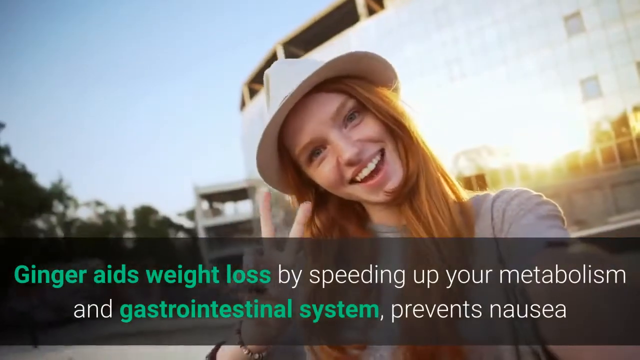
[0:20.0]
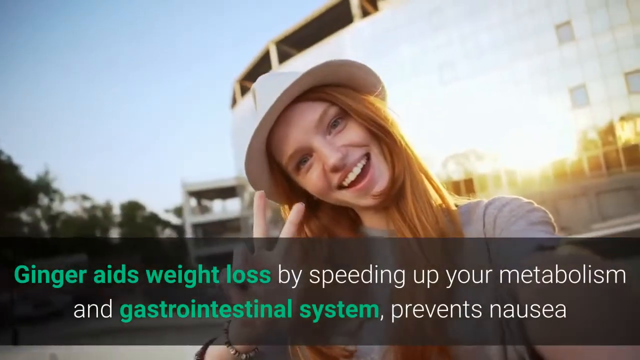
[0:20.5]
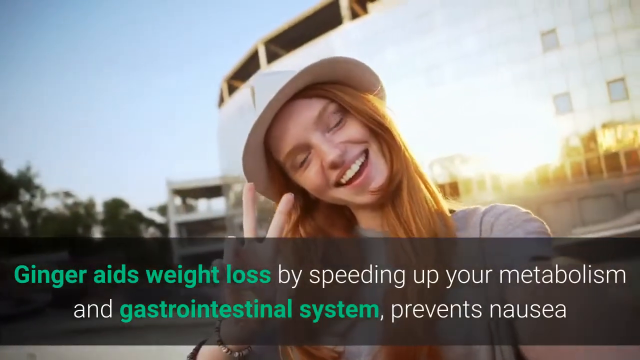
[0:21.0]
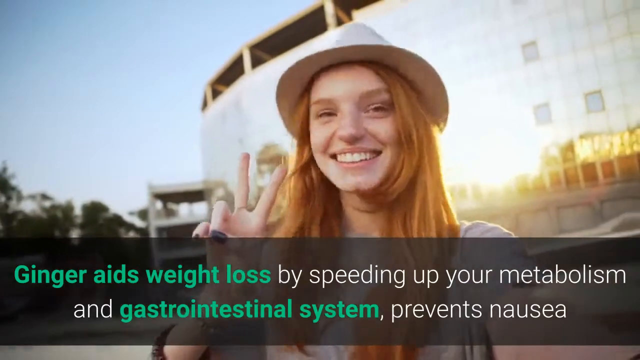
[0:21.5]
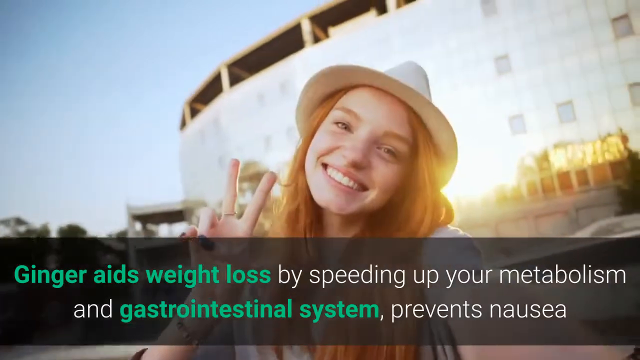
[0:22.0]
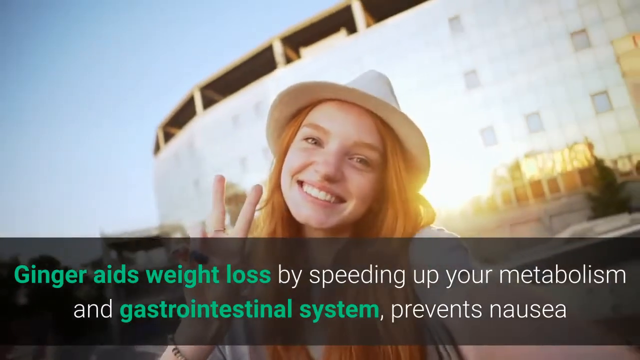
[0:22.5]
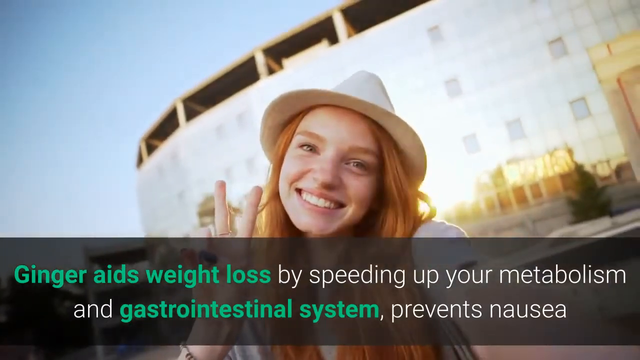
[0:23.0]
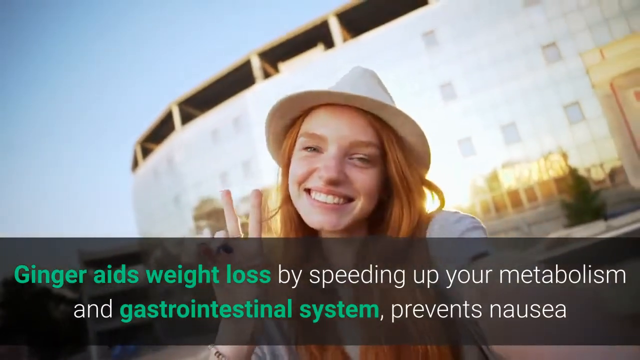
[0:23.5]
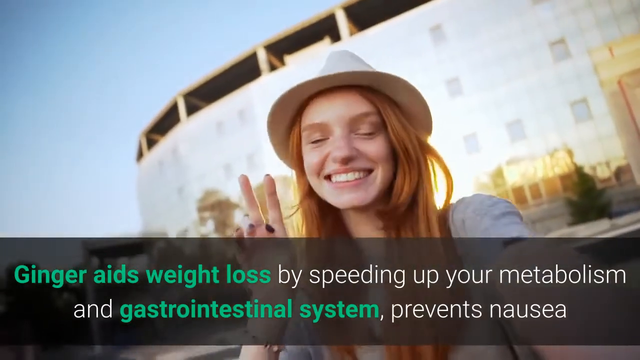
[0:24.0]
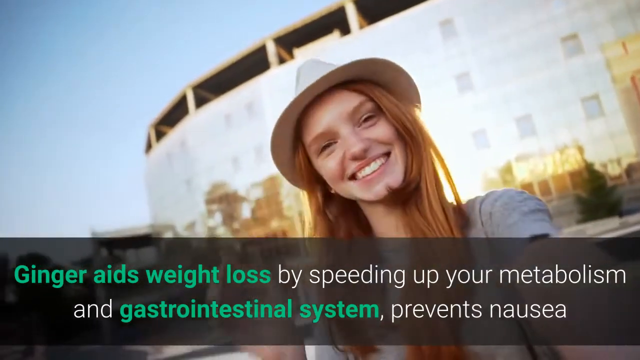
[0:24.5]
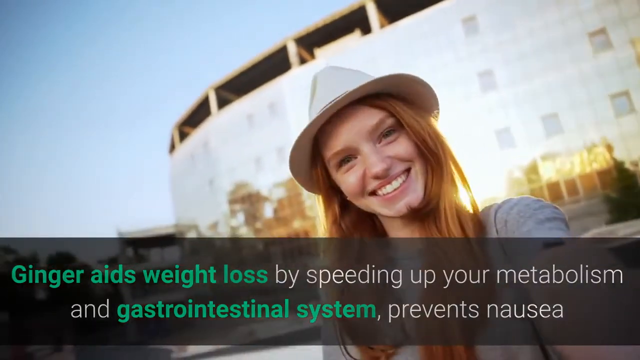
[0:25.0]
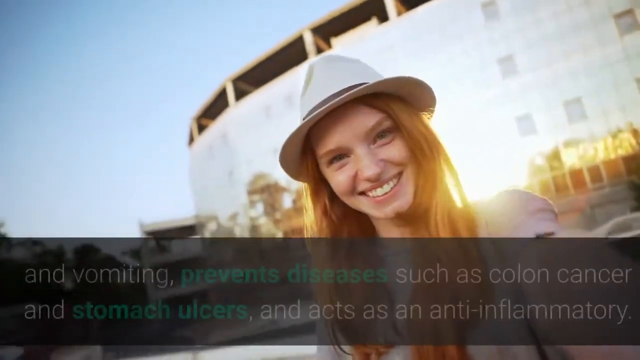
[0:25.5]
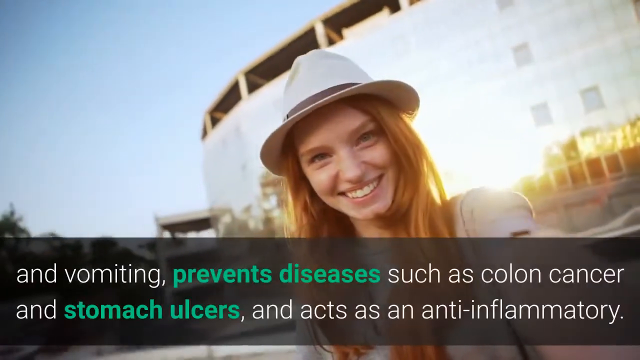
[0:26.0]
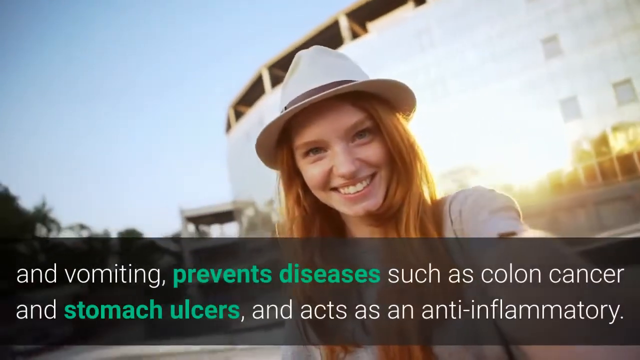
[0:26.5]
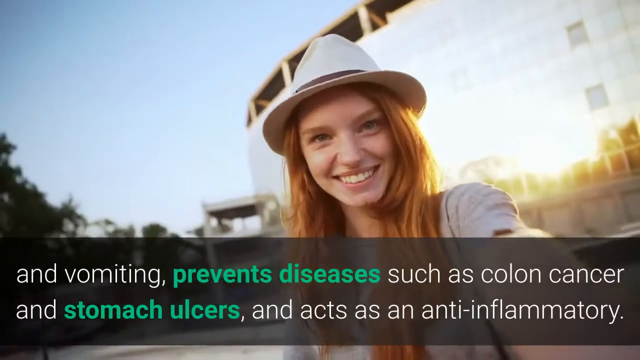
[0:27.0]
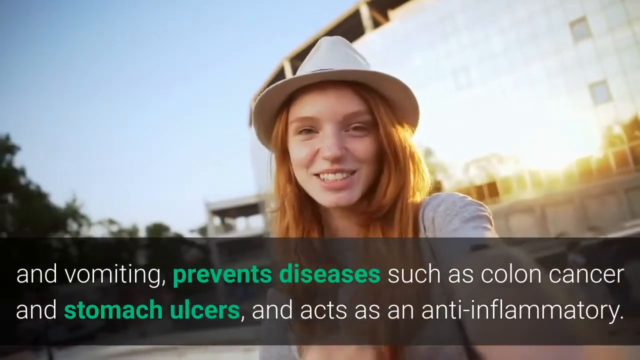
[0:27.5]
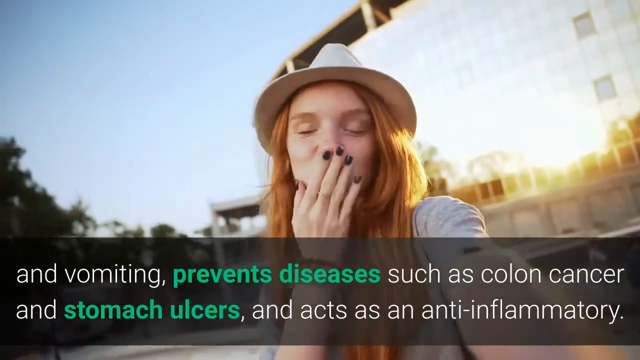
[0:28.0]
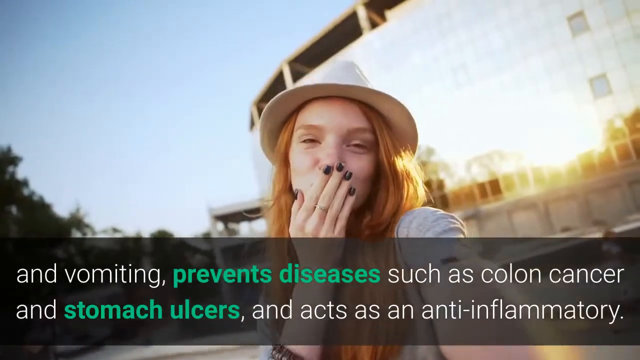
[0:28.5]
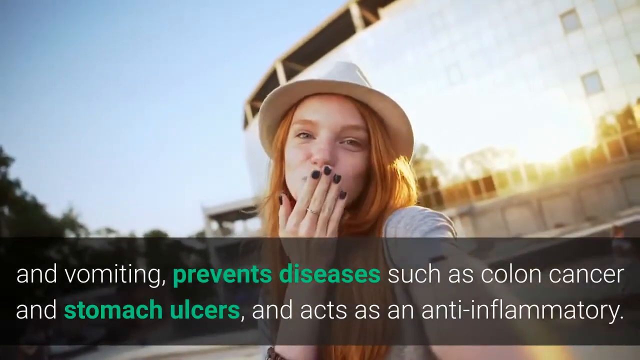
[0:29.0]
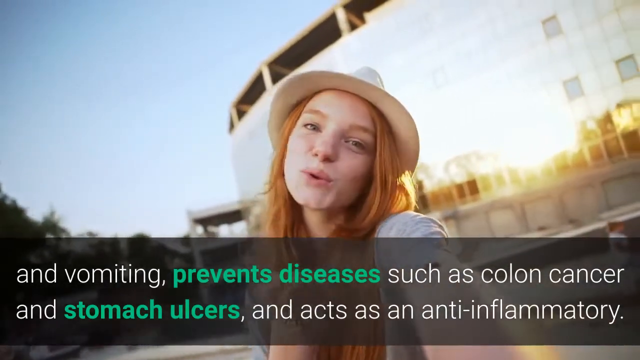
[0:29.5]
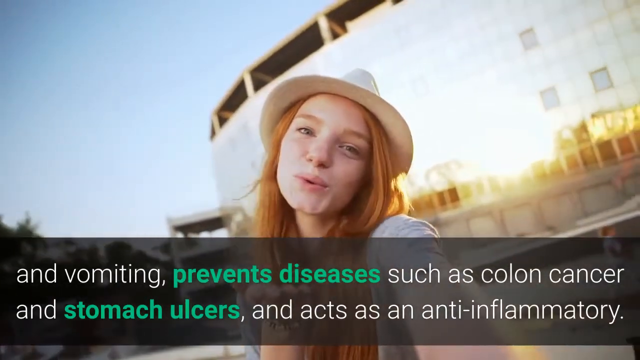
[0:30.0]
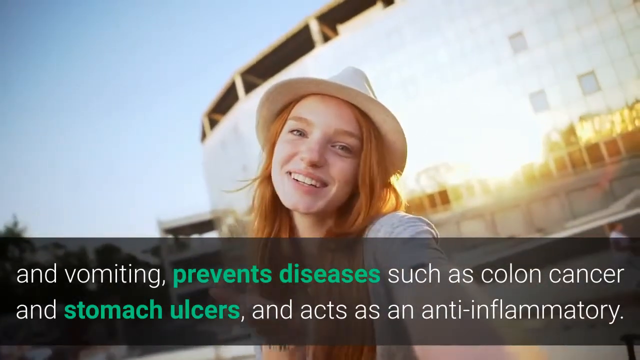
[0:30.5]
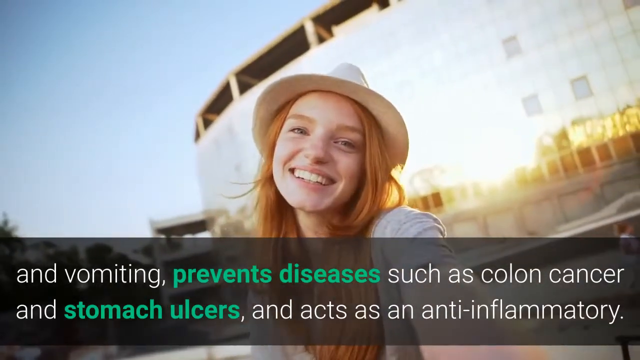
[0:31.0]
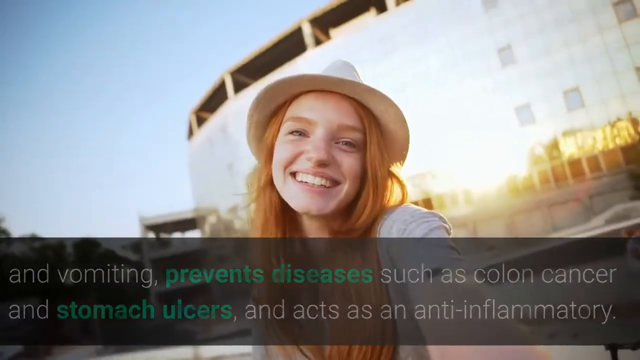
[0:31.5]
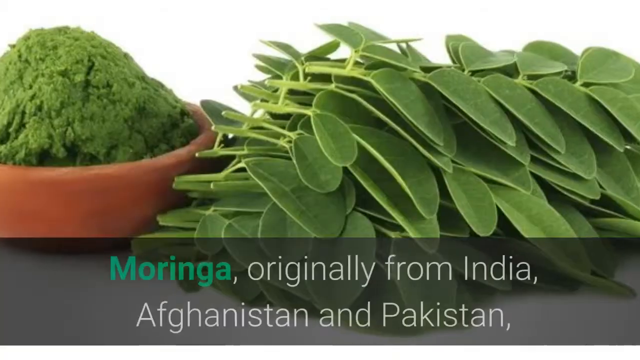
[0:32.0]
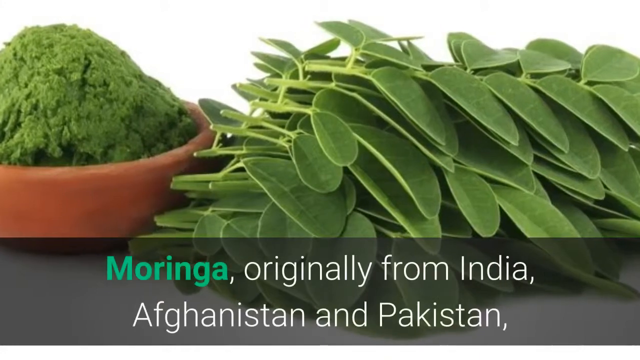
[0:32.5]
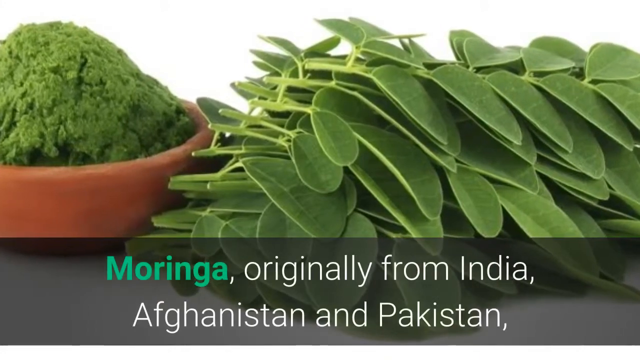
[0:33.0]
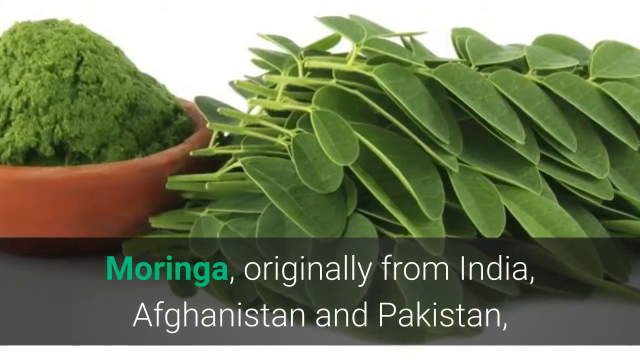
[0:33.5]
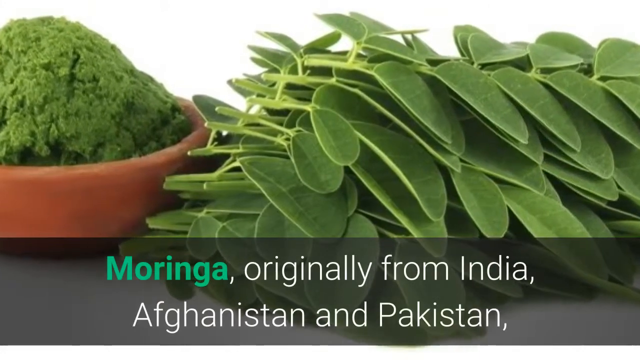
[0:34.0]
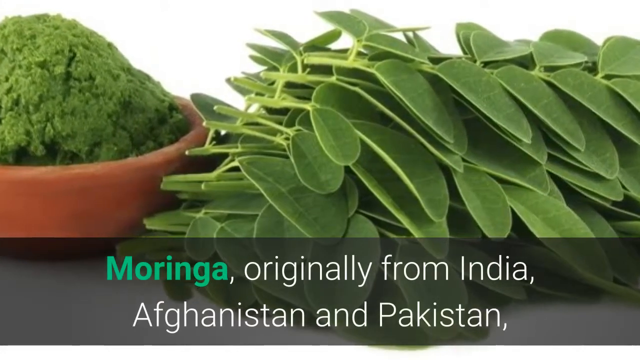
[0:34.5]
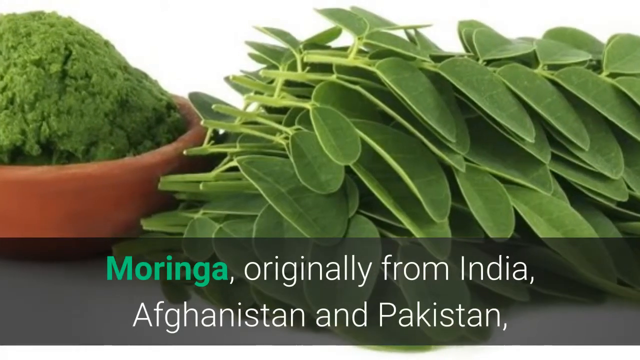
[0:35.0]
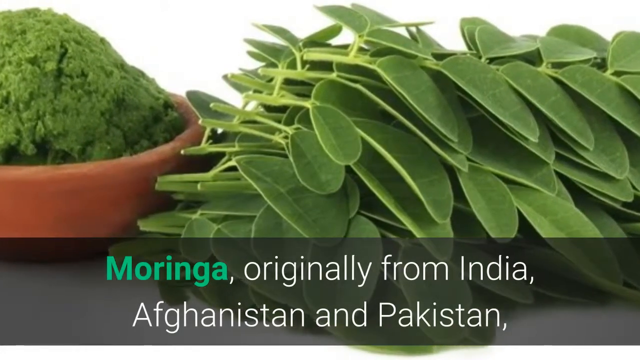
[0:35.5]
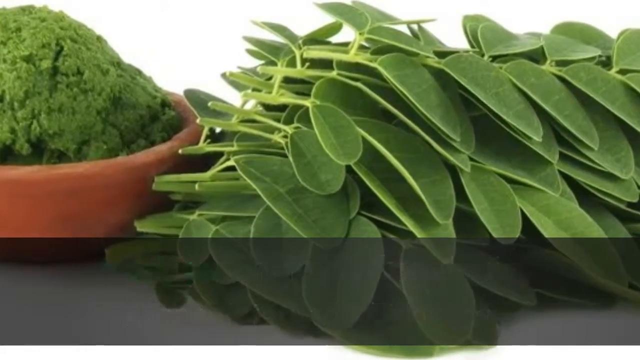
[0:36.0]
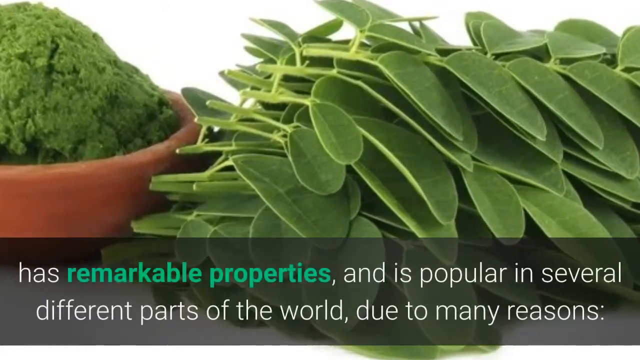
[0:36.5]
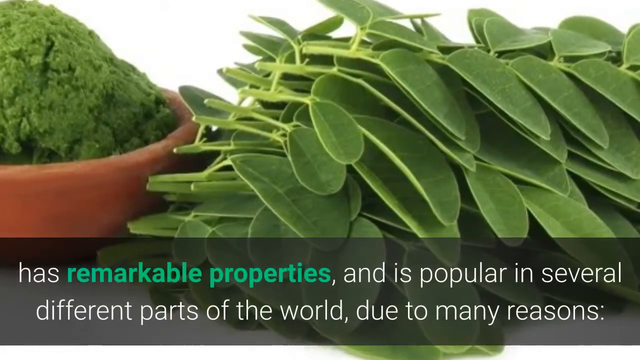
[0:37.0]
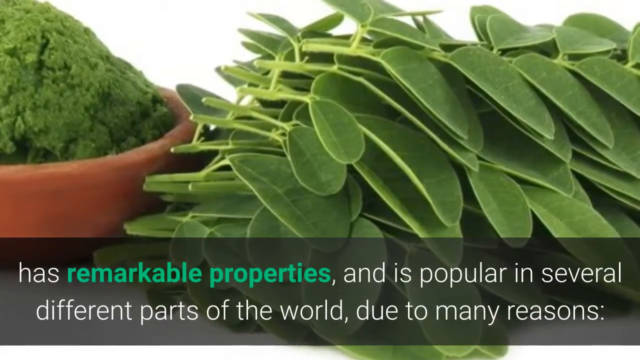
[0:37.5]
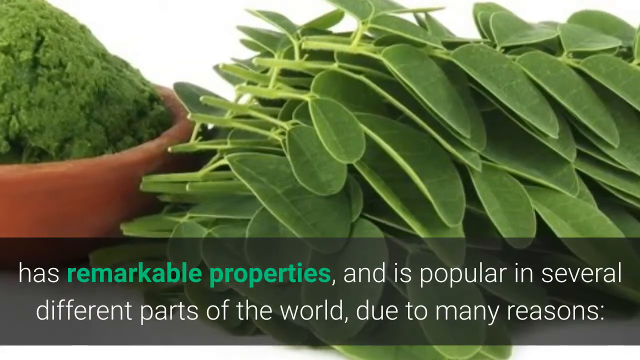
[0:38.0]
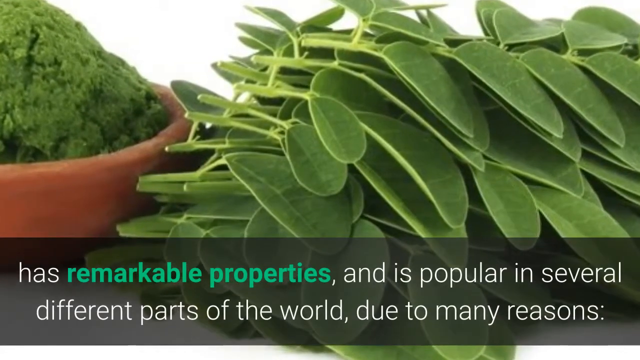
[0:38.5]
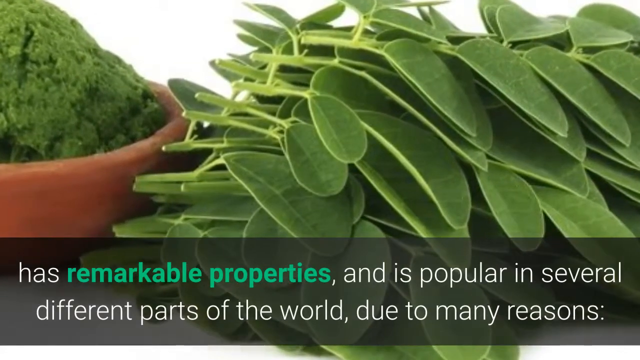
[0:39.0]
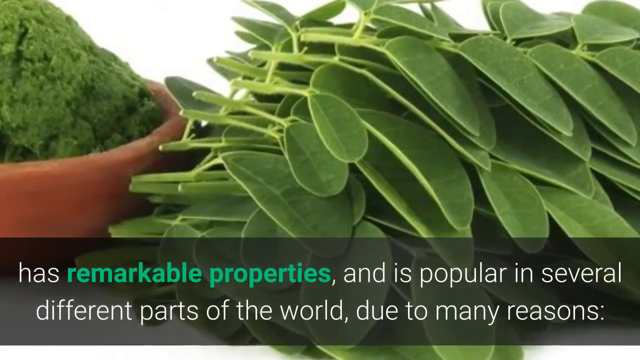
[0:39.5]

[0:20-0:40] Text says "ginger aids weight loss by speeding up your metabolism and gastrointestinal system, preventing nausea." In the background, a Caucasian woman with red hair and a hat stands in front of a very large circular building, holding up a peace sign and smiling. Further text says the ingredients can also help prevent vomiting and diseases such as colon cancer and stomach ulcers, and act as an anti-inflammatory agent. Then the text reads "Moringa, originally from India, Afghanistan, and Pakistan, has remarkable properties, and is popular in seven different parts of the world."